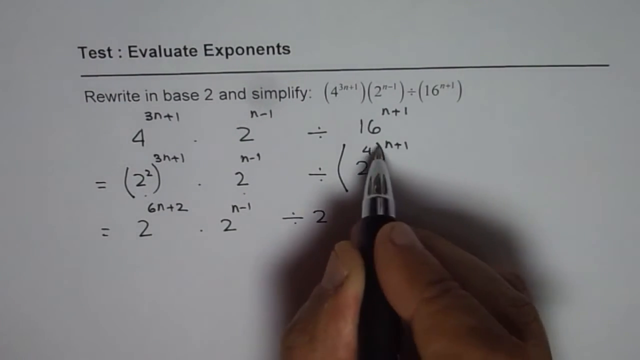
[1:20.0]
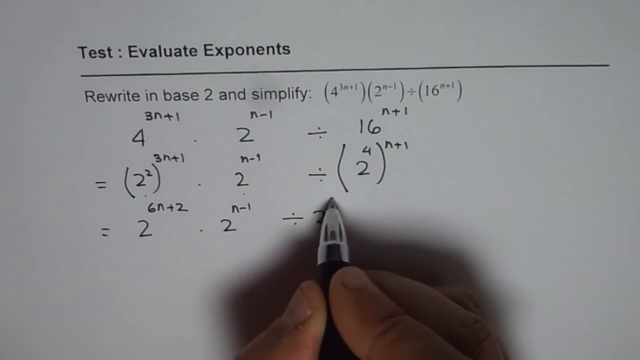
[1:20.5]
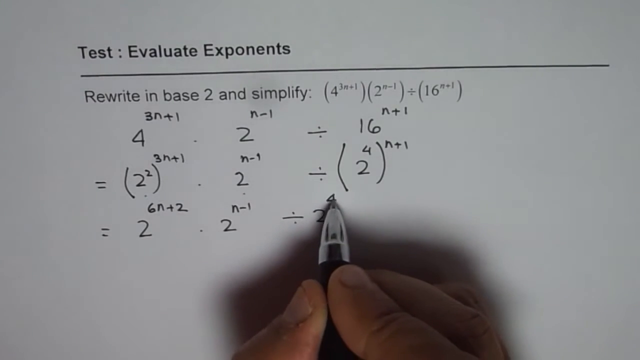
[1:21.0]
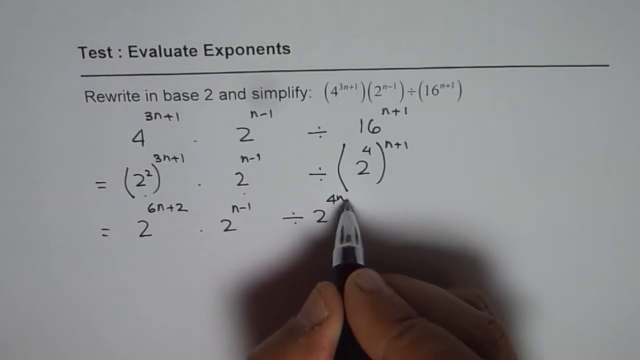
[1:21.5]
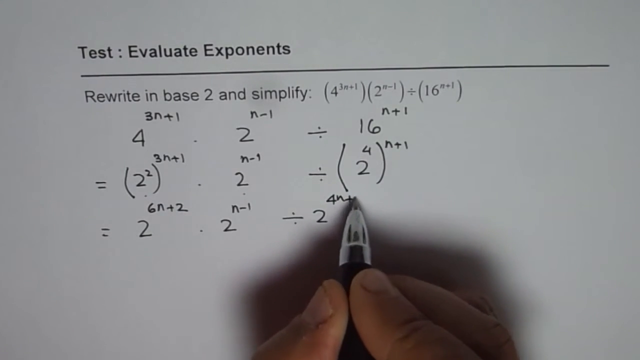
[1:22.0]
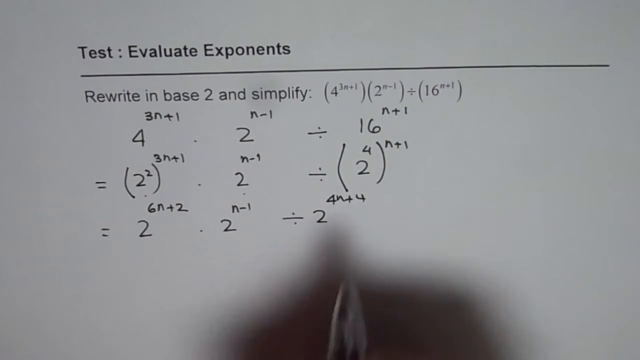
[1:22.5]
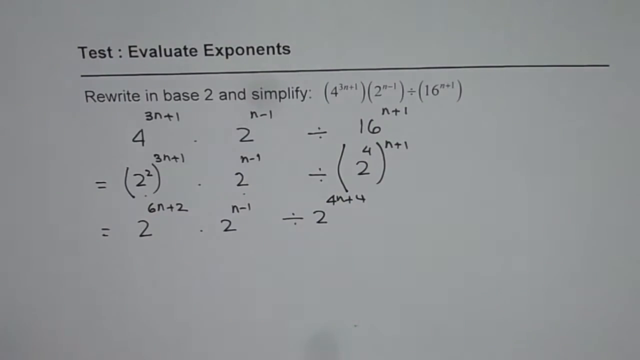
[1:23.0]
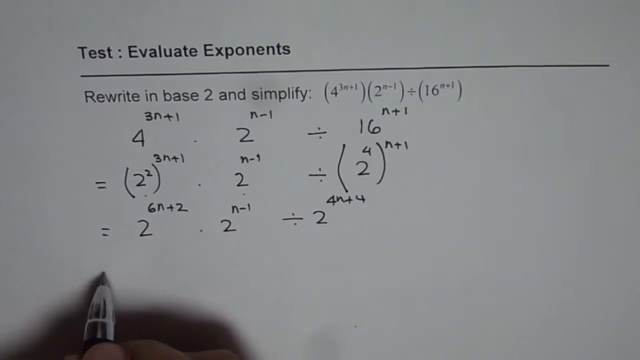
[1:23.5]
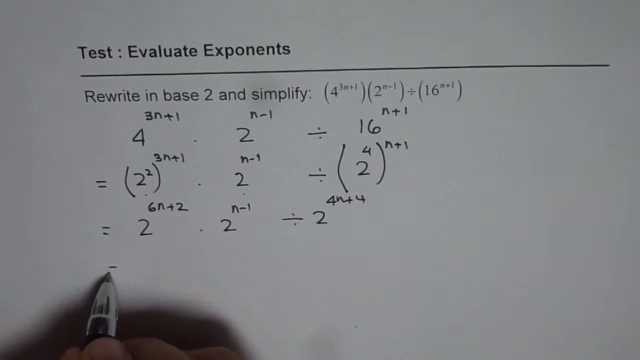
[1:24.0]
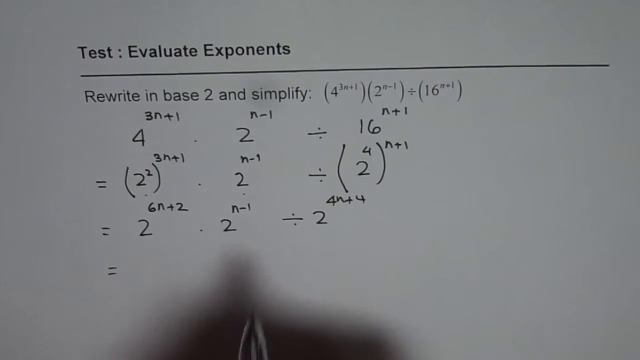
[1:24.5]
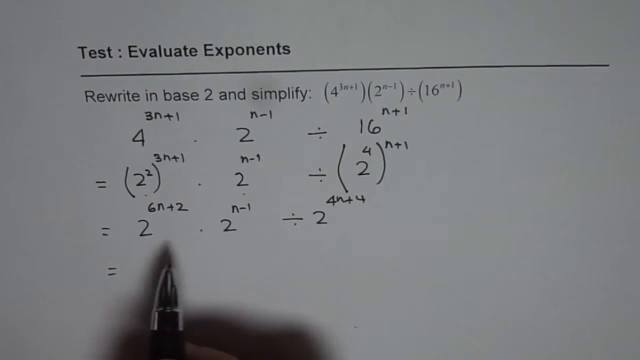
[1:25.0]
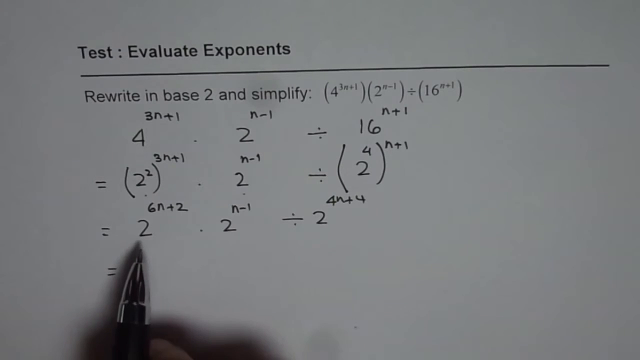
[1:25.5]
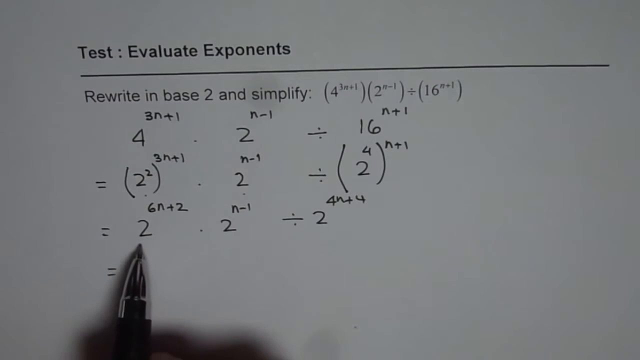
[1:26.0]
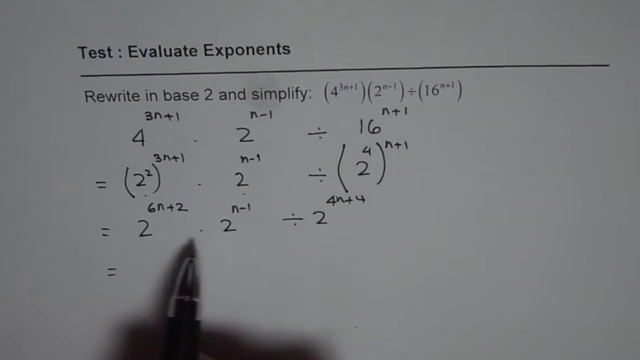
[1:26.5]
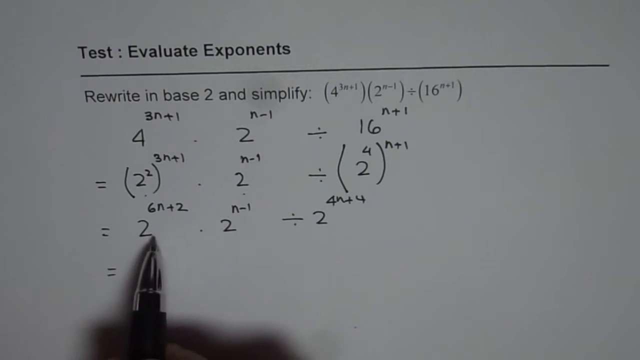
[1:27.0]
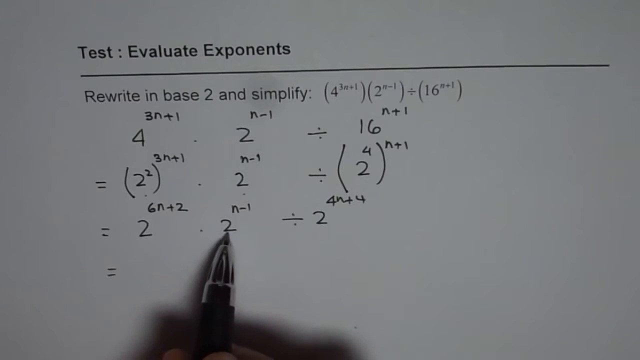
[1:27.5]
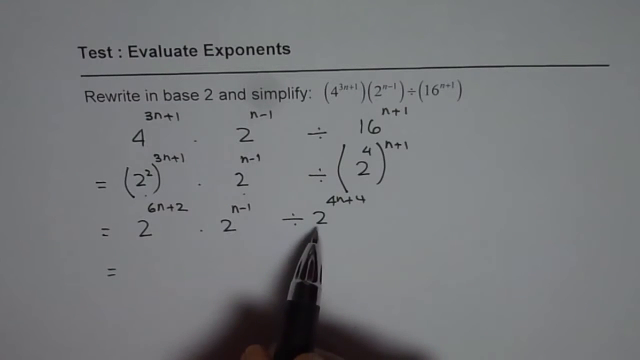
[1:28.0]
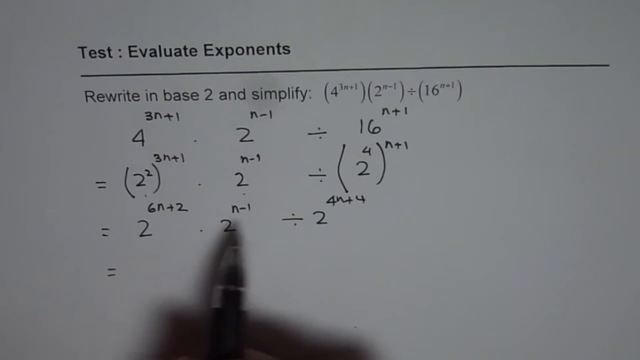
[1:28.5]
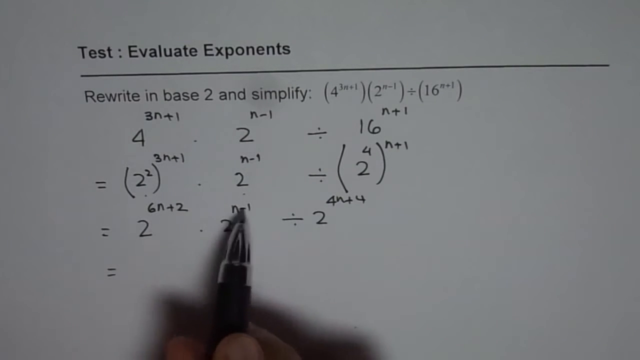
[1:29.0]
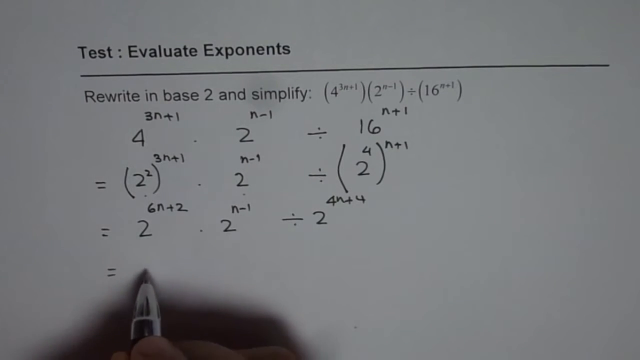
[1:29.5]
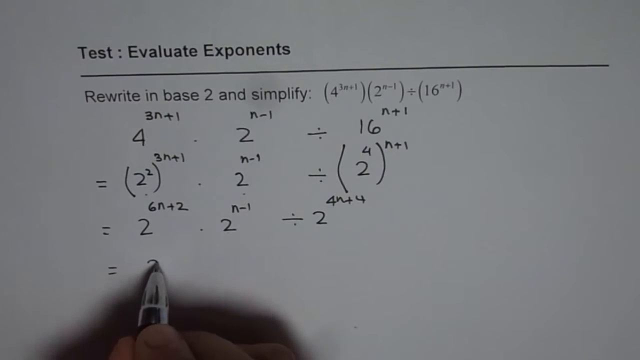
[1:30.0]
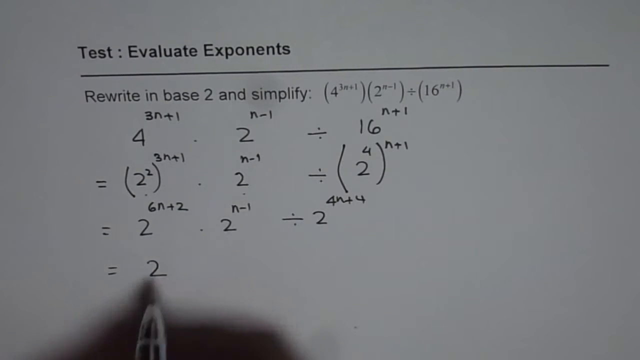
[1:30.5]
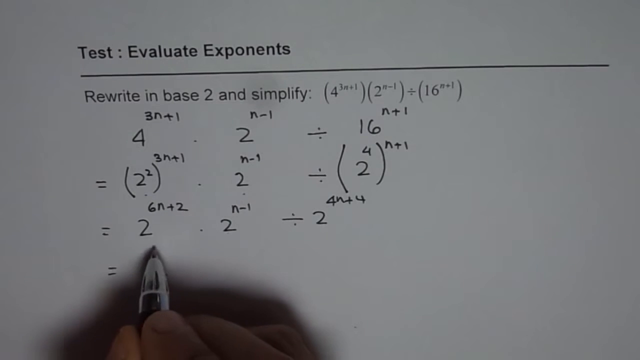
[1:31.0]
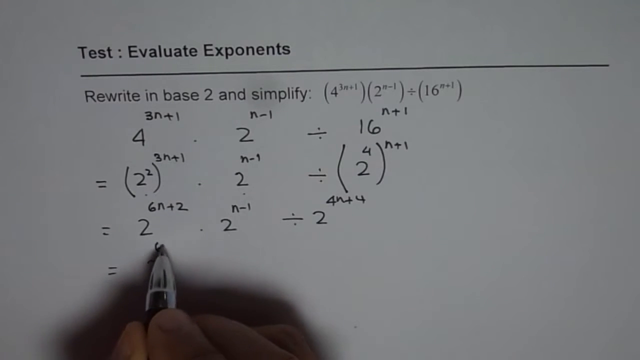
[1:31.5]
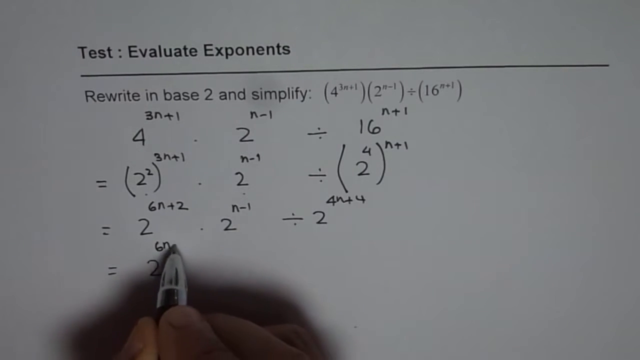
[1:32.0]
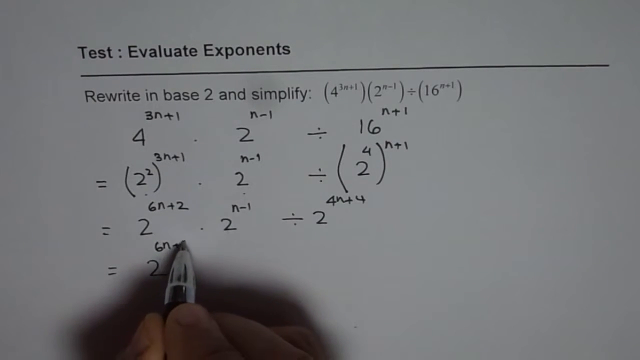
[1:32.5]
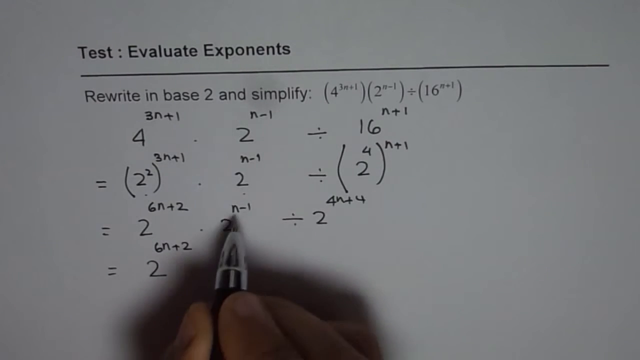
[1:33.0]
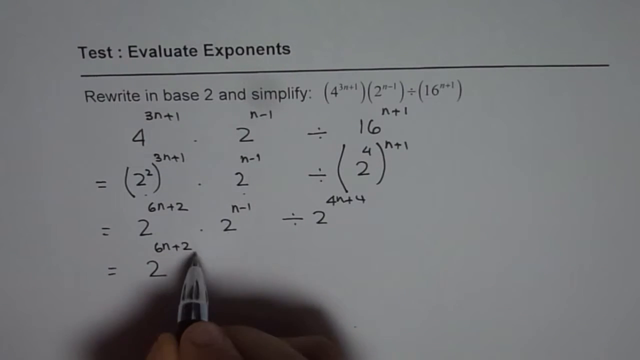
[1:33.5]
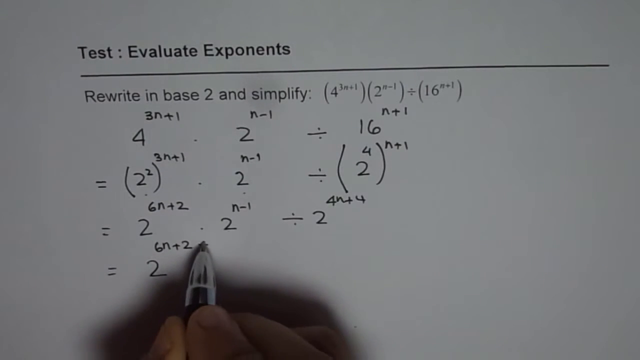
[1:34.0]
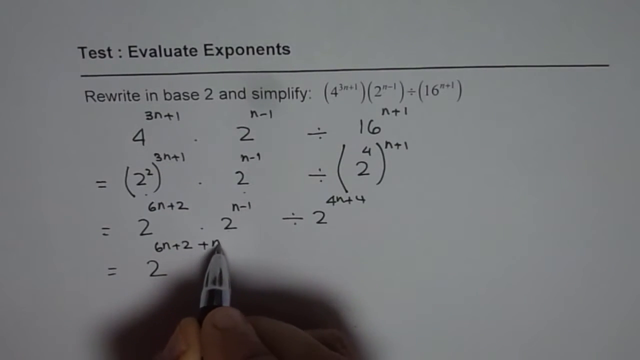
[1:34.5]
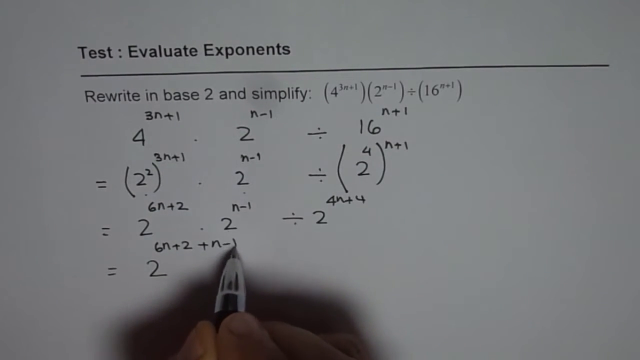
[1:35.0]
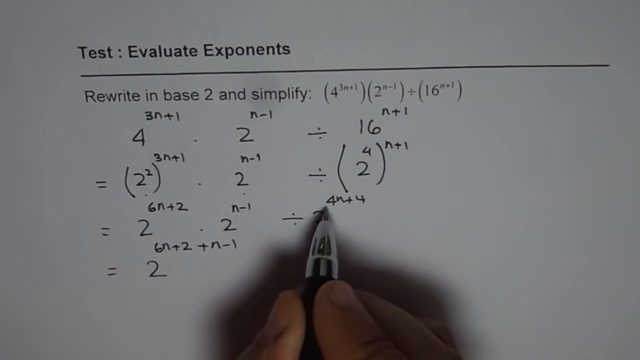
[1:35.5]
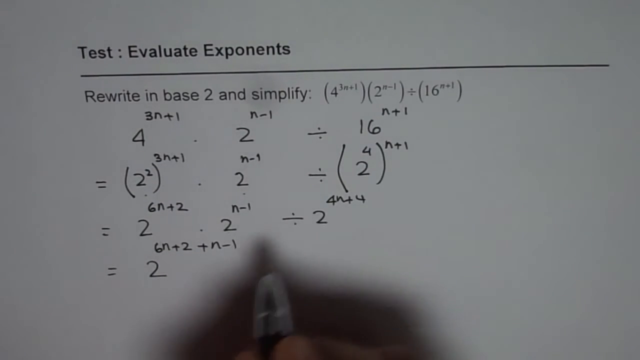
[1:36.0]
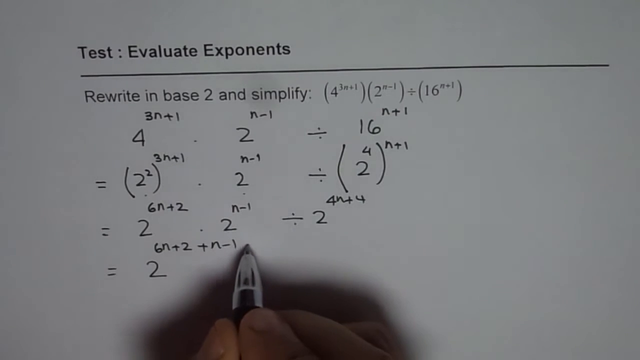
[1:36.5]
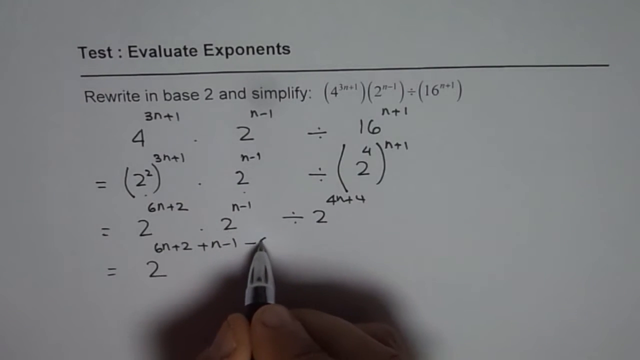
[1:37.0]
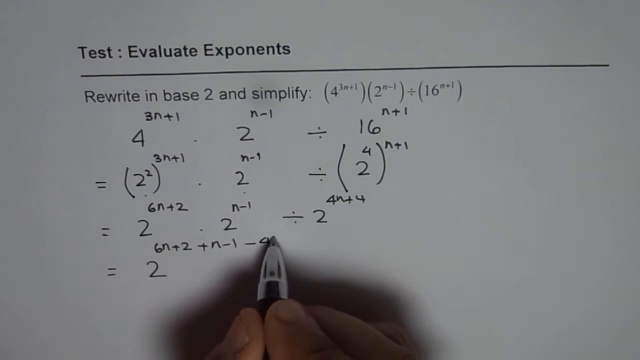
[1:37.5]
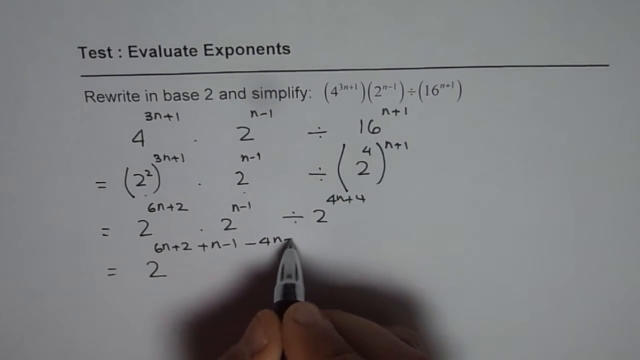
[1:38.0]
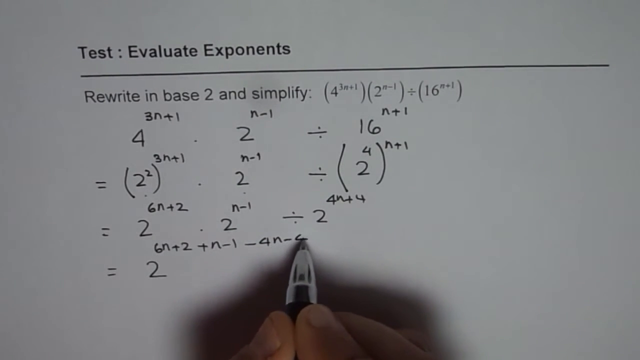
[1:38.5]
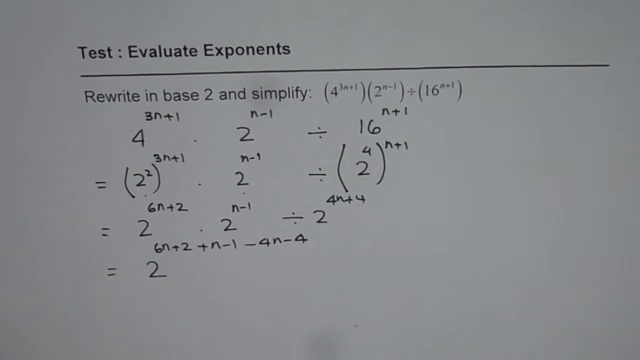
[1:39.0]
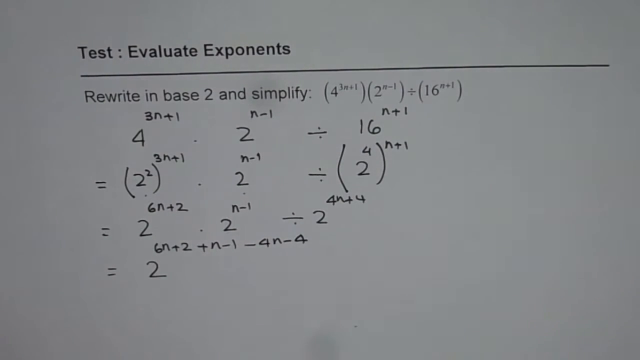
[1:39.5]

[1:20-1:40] A white piece of paper has bold black text reading "test evaluate exponents," with a line across the paper underneath and, below that, black text saying "rewrite in base two and simplify," then a colon and a formula on the right side. At the bottom of the screen, a person holds a black pen with a silver tip in their right hand. They seem to have already written two lines of what look like formulas and are in the middle of a third line, writing the number 4 above a 2 written earlier, with n + 4 next to the 4. They start a fourth line, point at the number 2 on the third line, write the number 2, put 6n + 2 above it, and to the right add + n − 1 − 4n − 4. Each time they write, they keep pointing up at the lines written before, and they seem to be simplifying the equation.